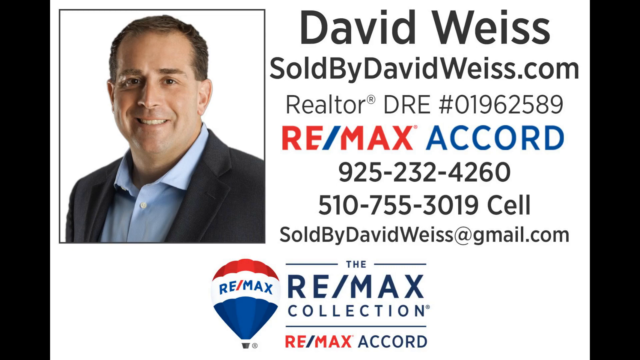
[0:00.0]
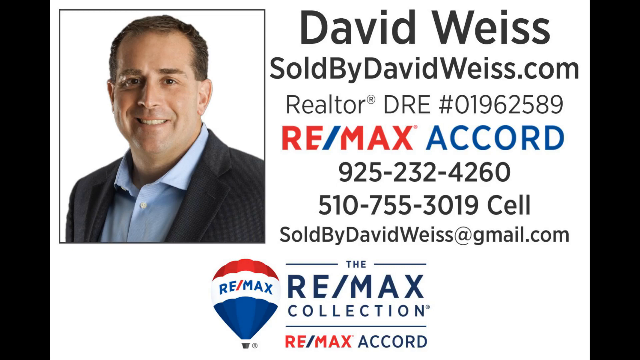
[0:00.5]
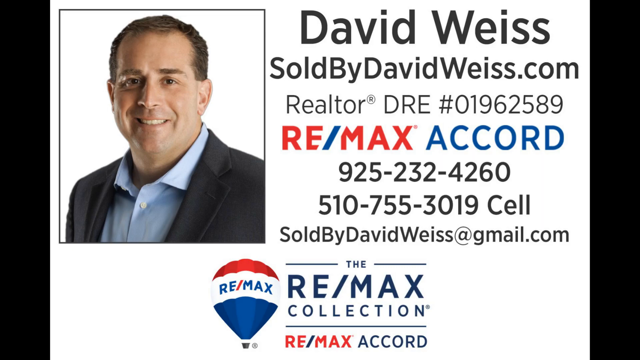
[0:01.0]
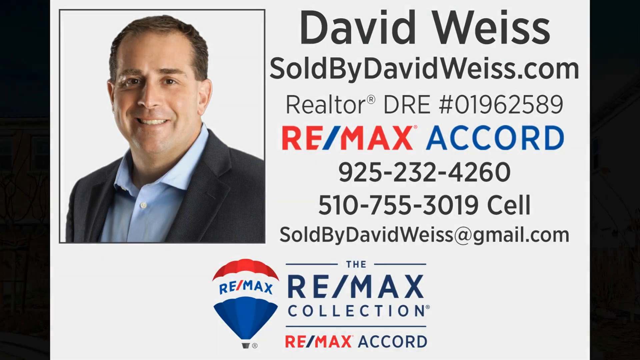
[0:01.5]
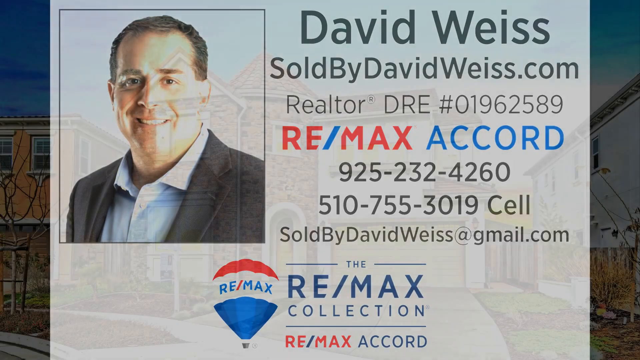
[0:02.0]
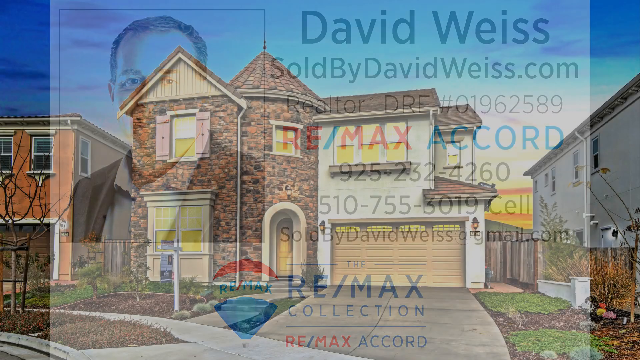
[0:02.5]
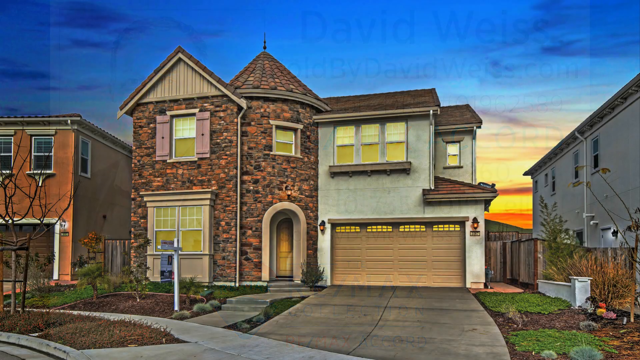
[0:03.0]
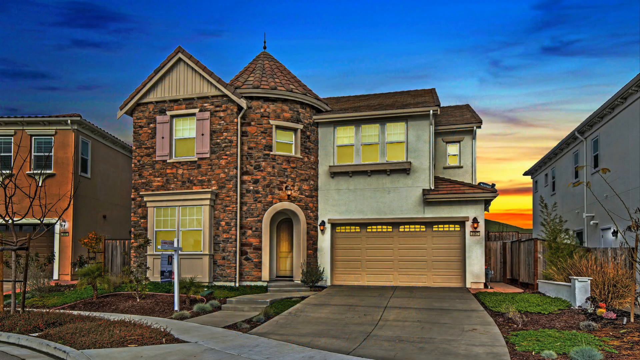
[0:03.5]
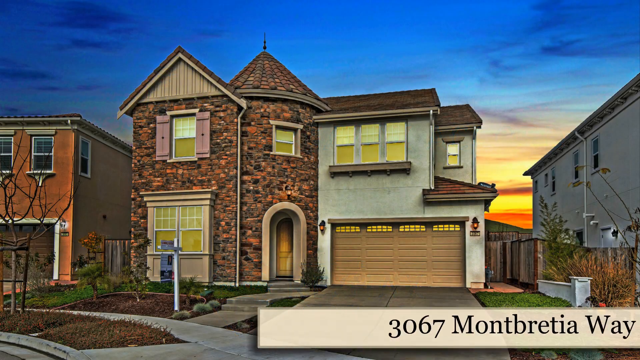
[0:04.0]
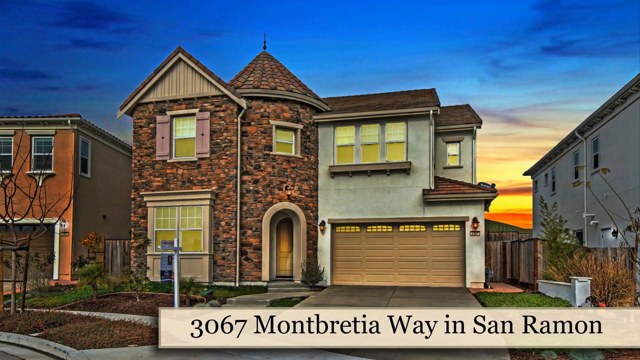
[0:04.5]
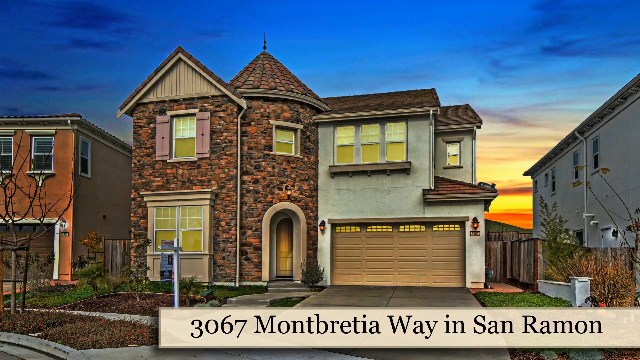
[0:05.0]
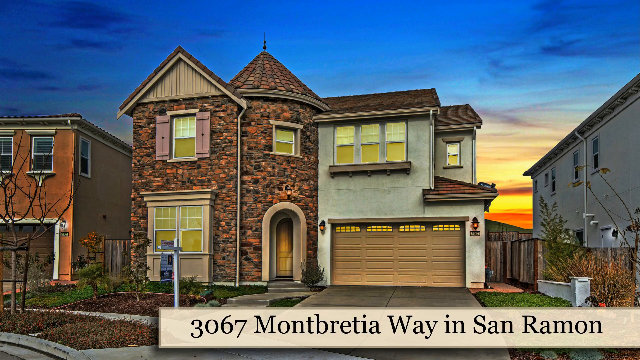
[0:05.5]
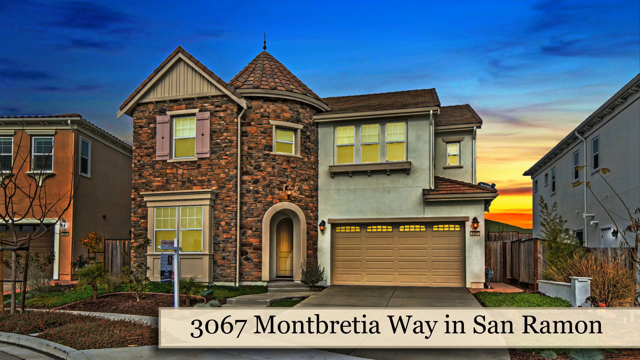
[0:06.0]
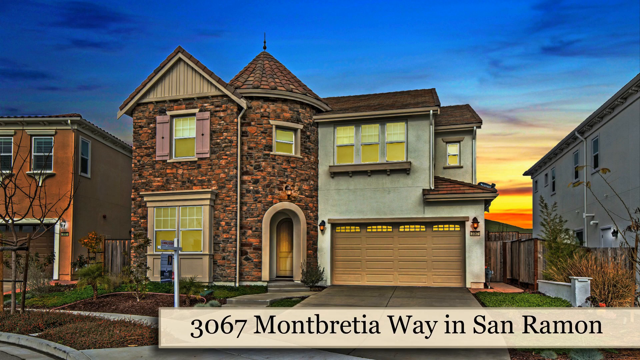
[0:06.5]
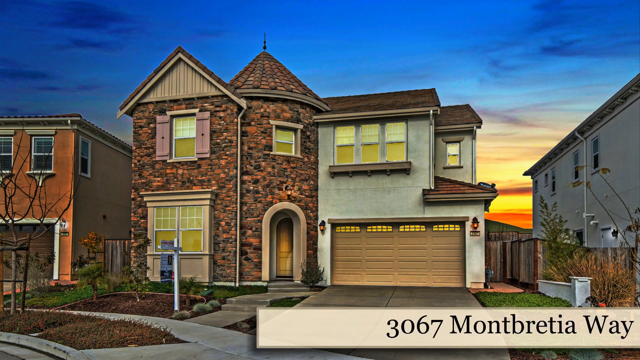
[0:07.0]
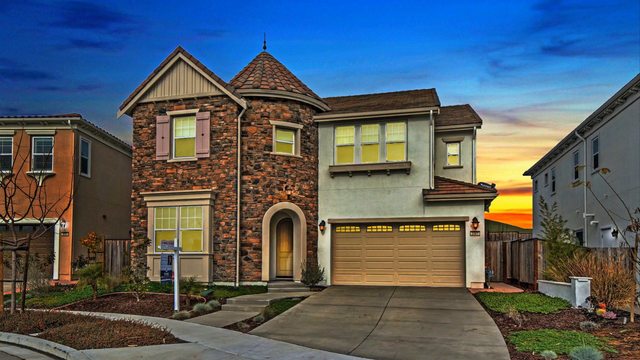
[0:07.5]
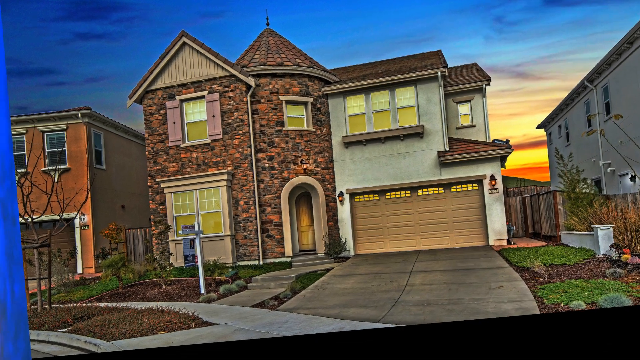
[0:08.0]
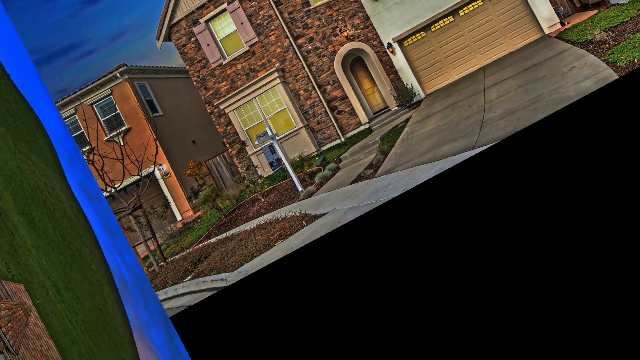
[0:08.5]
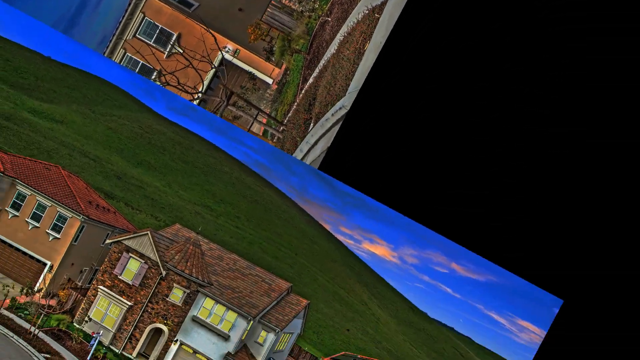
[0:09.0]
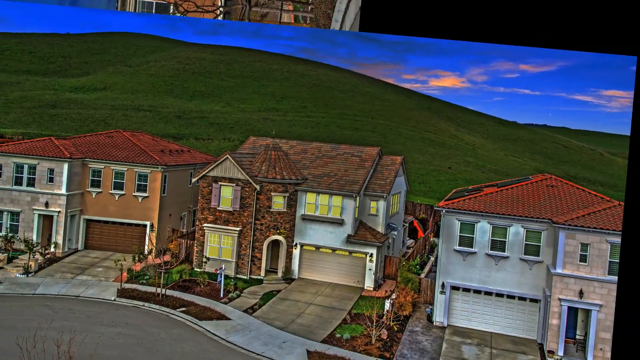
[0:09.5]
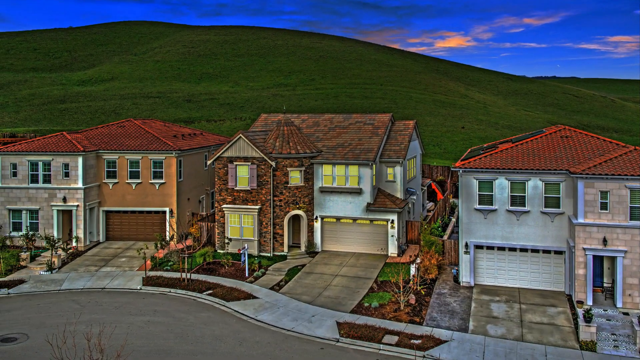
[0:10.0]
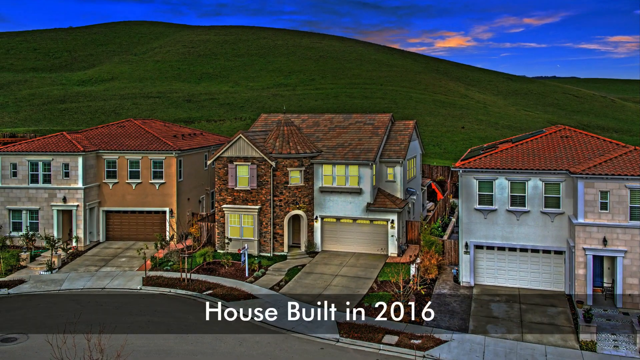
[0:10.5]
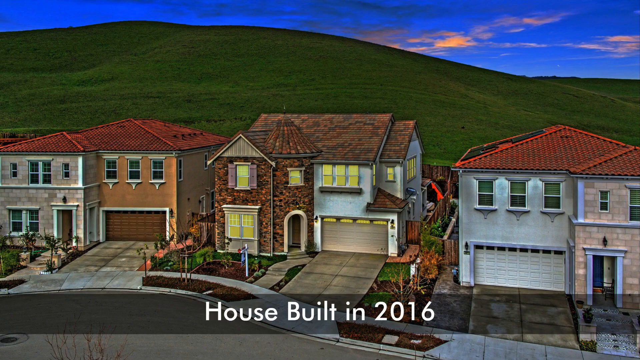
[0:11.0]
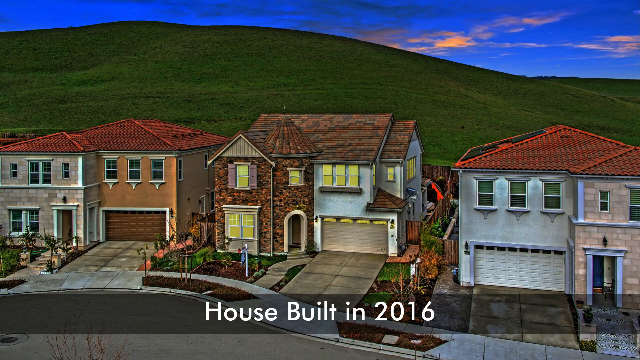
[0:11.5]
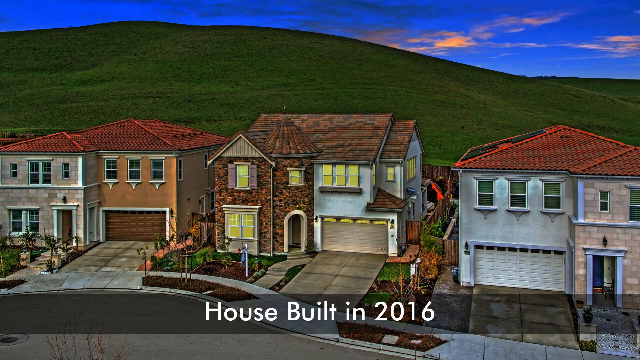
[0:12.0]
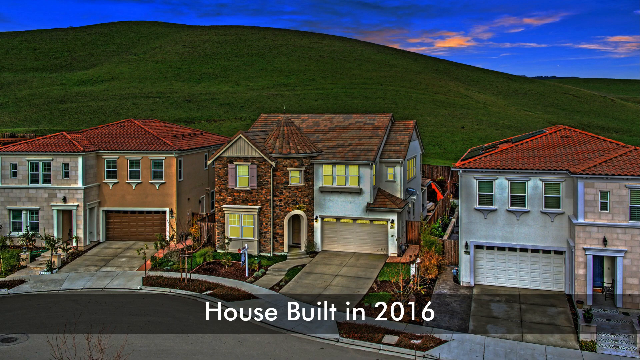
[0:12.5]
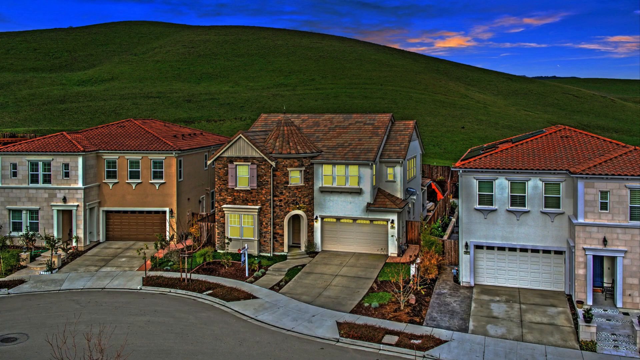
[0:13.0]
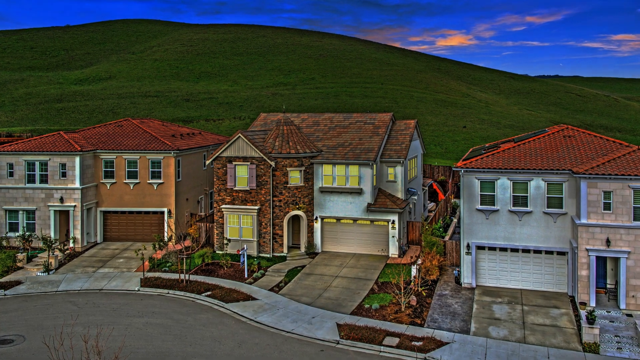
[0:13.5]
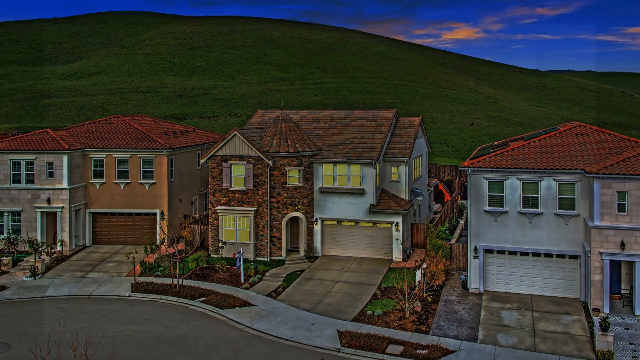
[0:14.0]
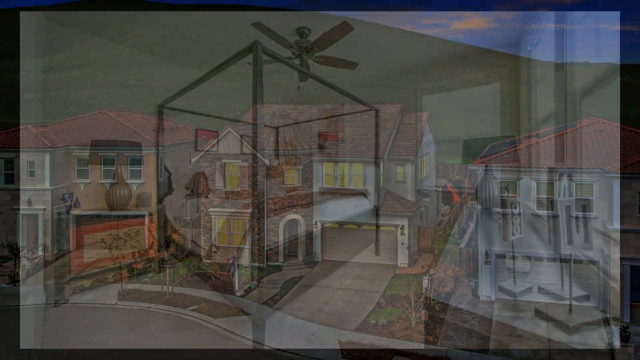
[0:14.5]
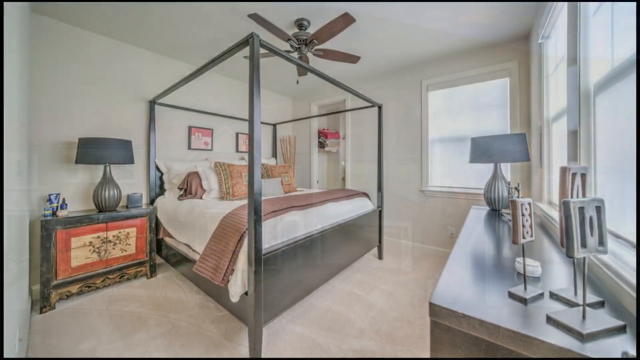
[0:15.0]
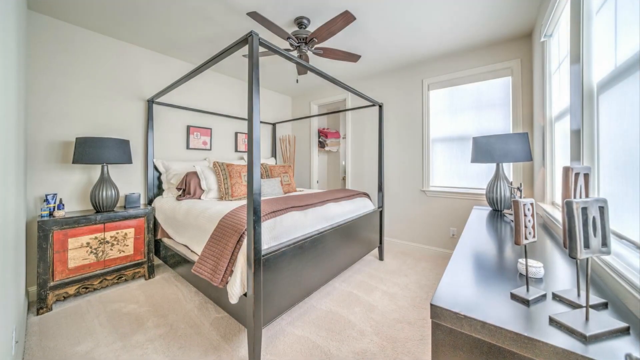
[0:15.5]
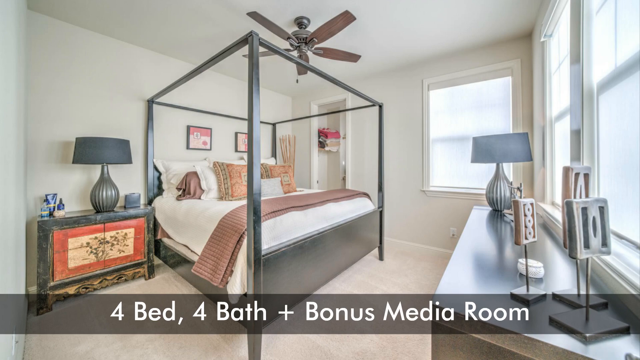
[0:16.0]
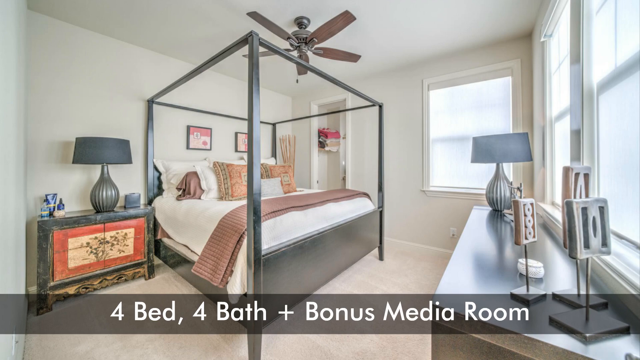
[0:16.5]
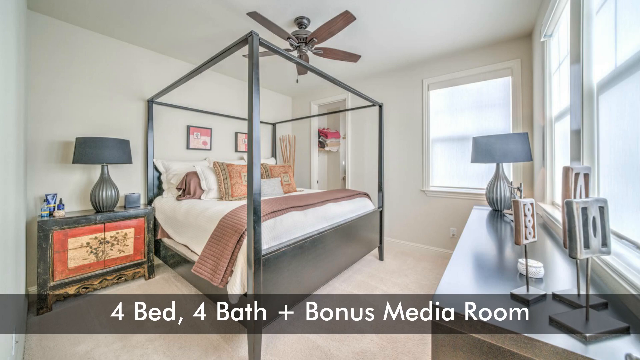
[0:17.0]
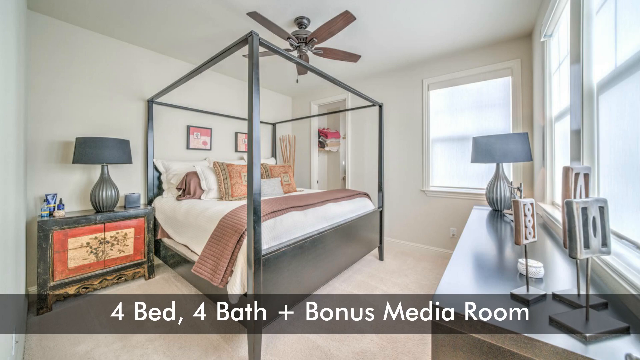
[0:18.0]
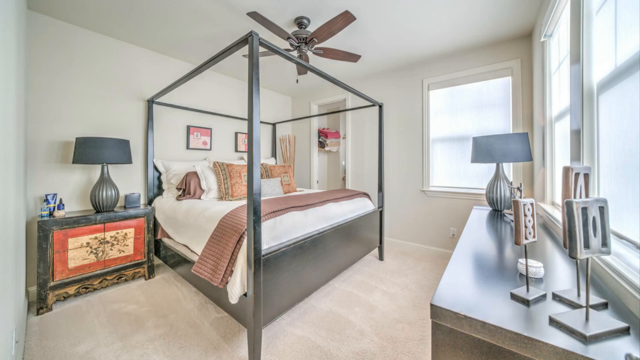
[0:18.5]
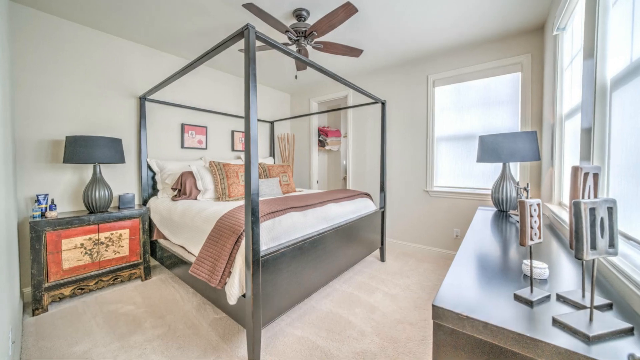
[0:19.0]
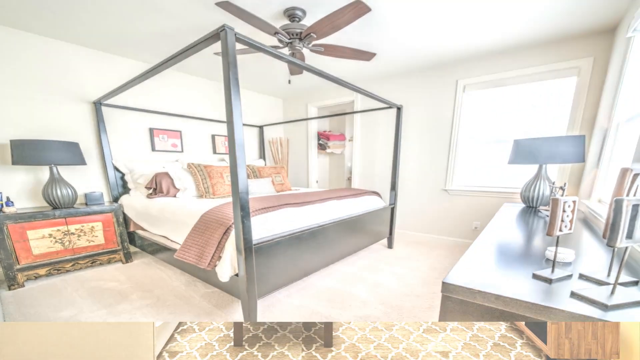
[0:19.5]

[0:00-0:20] The video advertises a house built in 2016 with 4 bedrooms, 4 bathrooms and a bonus room, presented by a real estate company. The name David Waze appears, with the property sold by David Waze.com, along with his email and two phone numbers to reach him. The name of the company is the Remarks Collection.